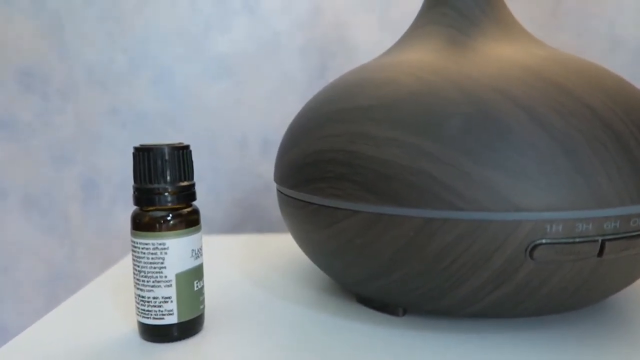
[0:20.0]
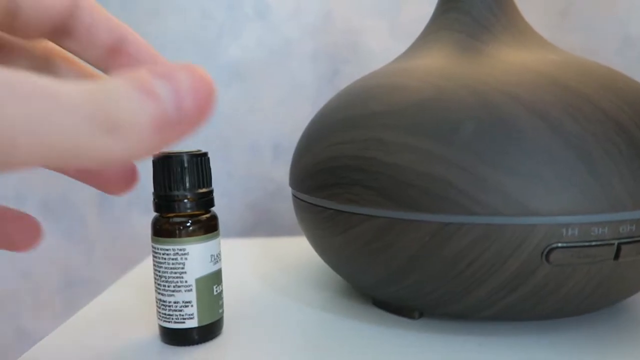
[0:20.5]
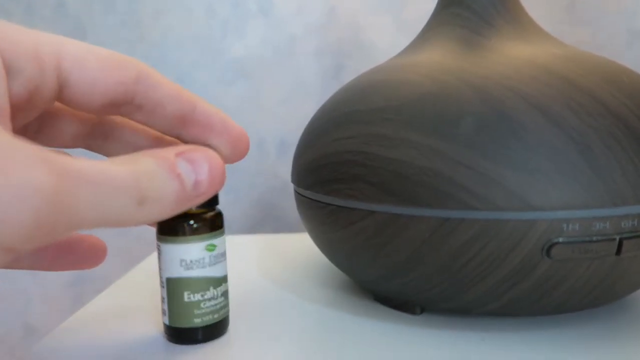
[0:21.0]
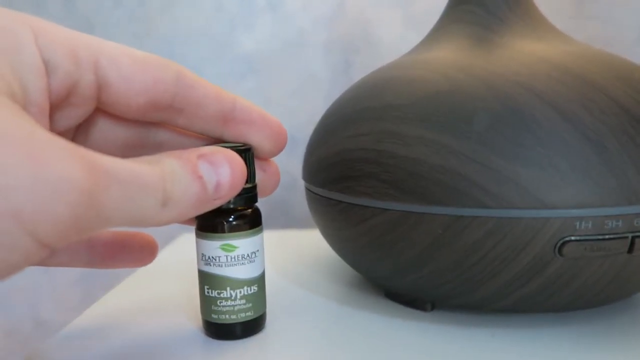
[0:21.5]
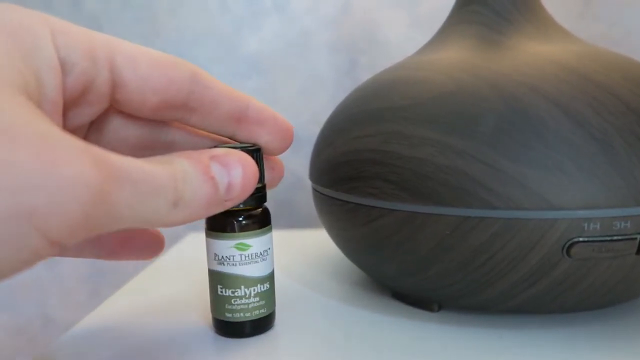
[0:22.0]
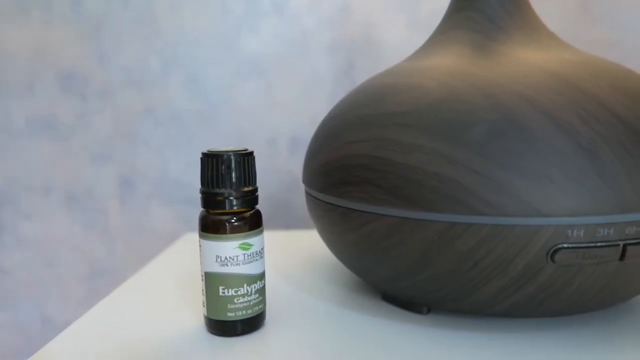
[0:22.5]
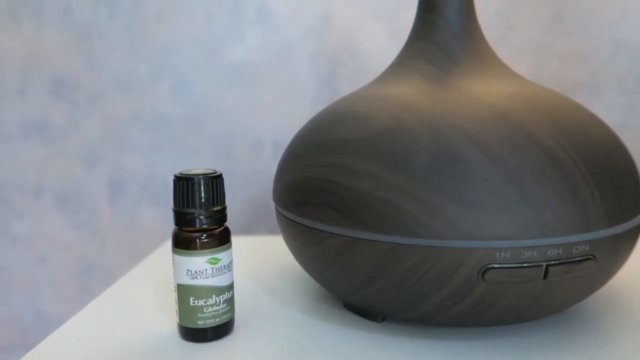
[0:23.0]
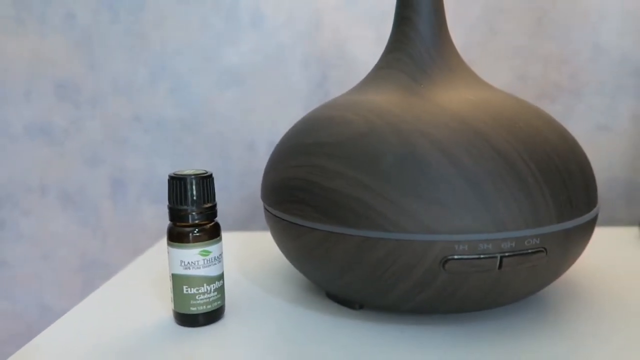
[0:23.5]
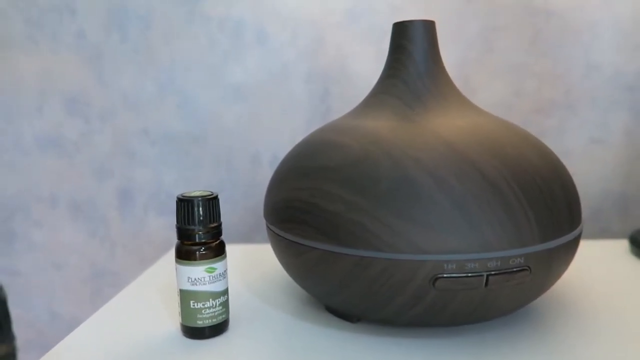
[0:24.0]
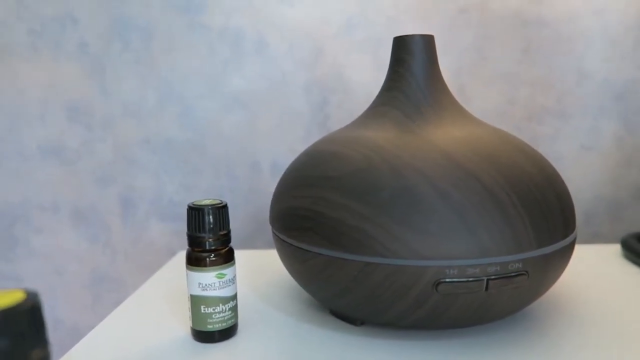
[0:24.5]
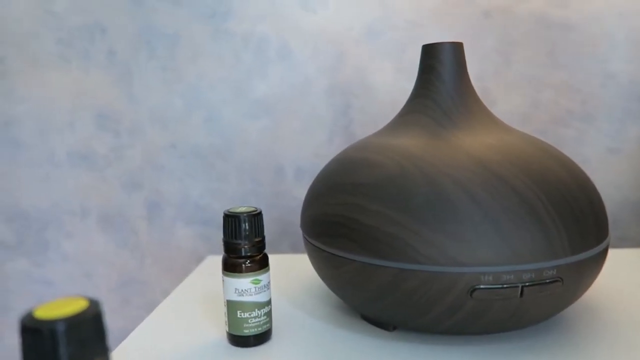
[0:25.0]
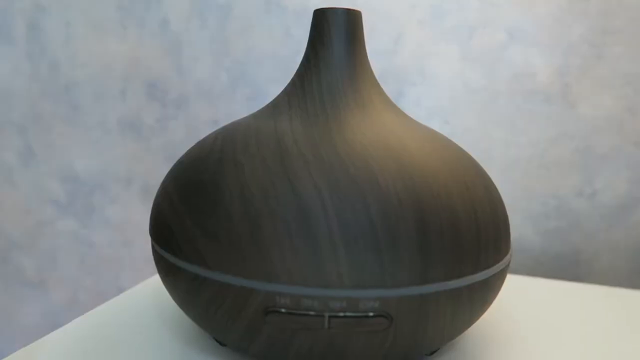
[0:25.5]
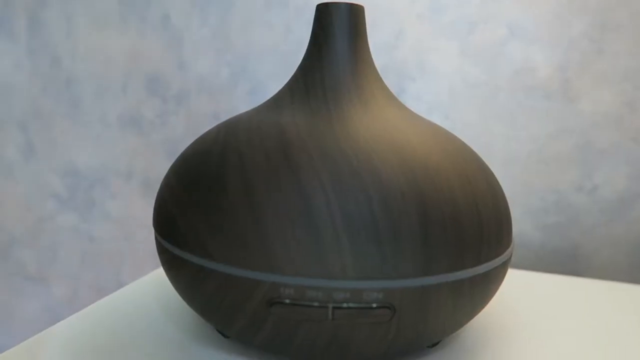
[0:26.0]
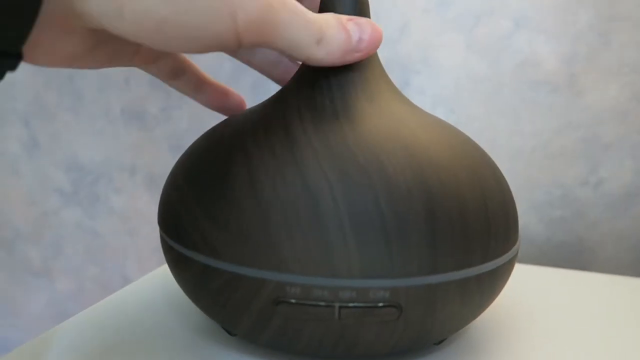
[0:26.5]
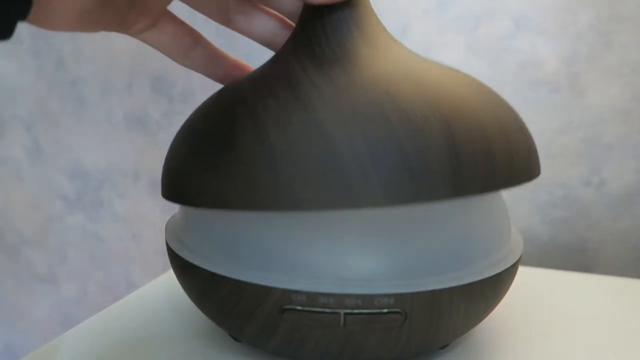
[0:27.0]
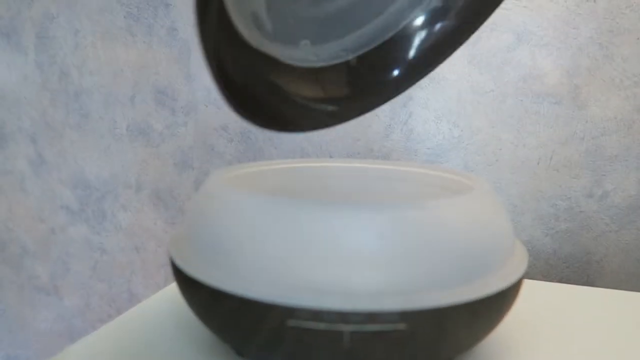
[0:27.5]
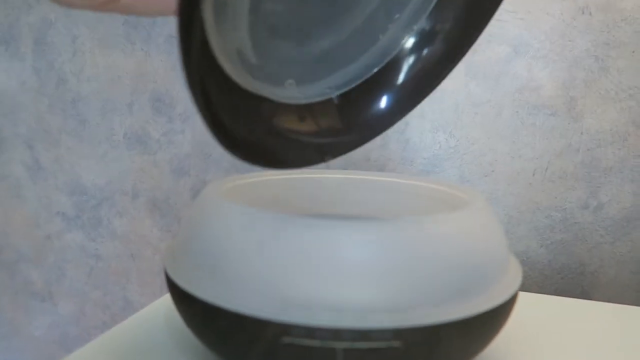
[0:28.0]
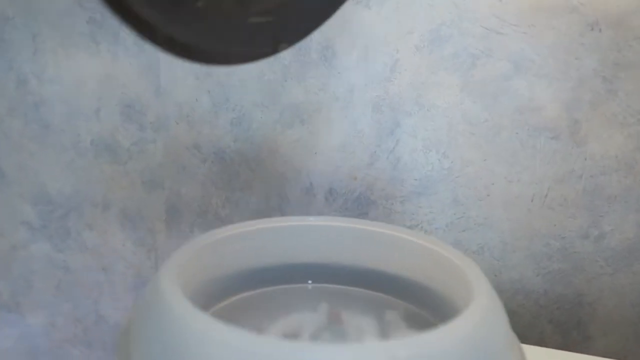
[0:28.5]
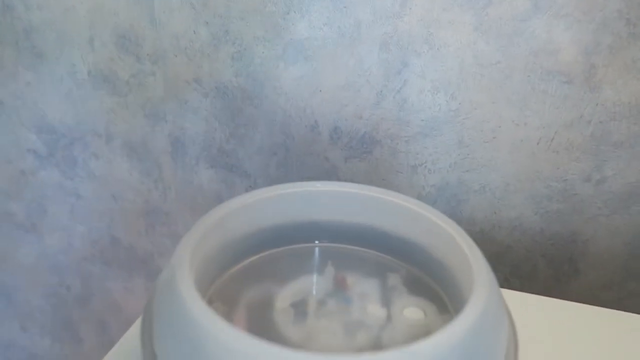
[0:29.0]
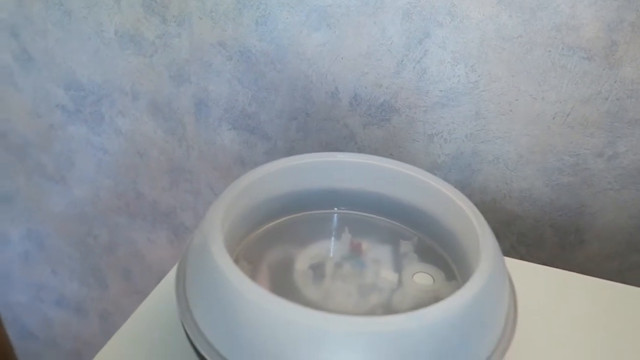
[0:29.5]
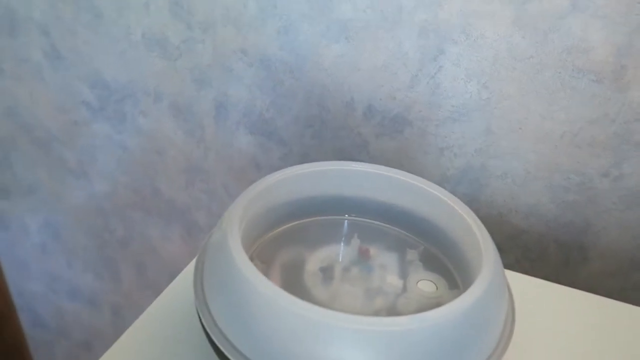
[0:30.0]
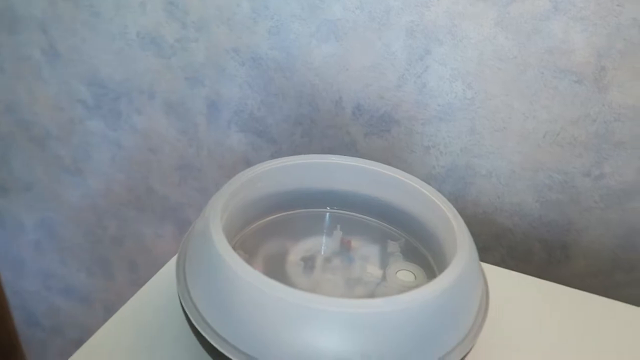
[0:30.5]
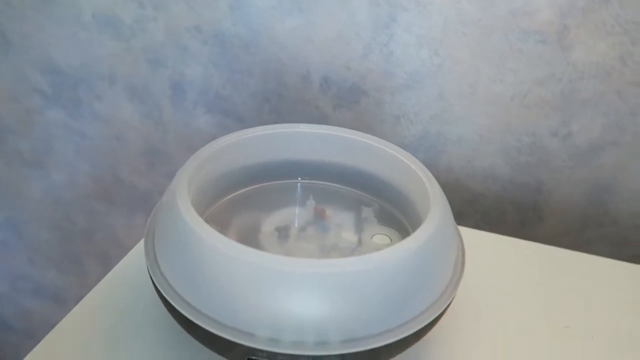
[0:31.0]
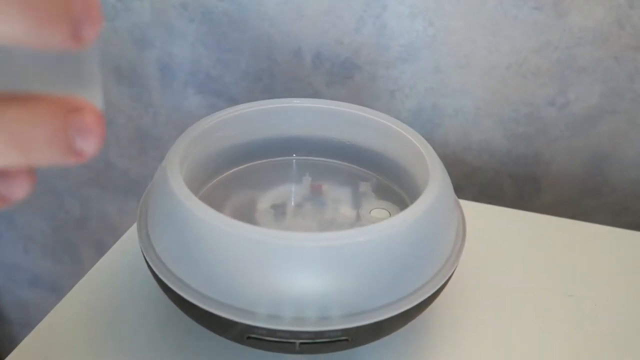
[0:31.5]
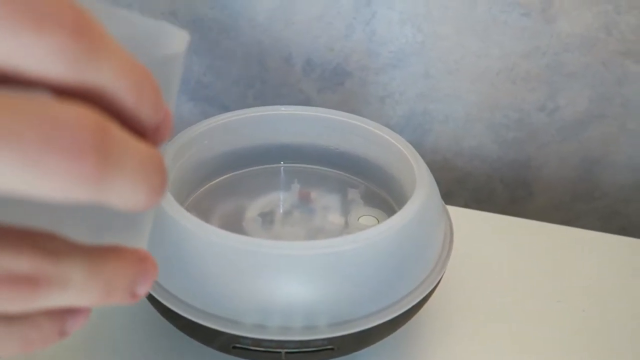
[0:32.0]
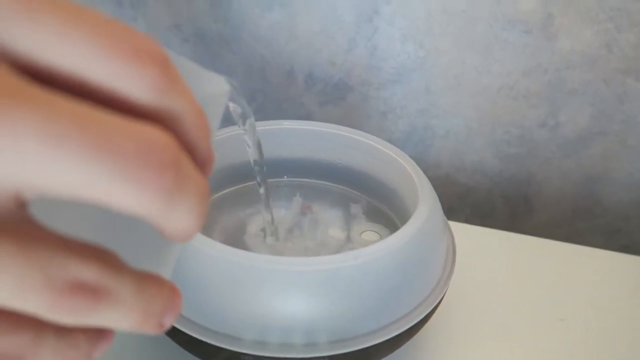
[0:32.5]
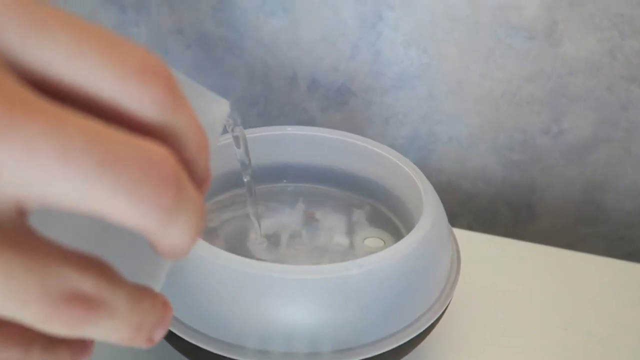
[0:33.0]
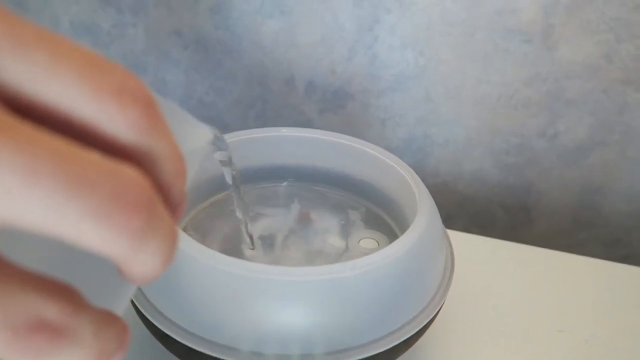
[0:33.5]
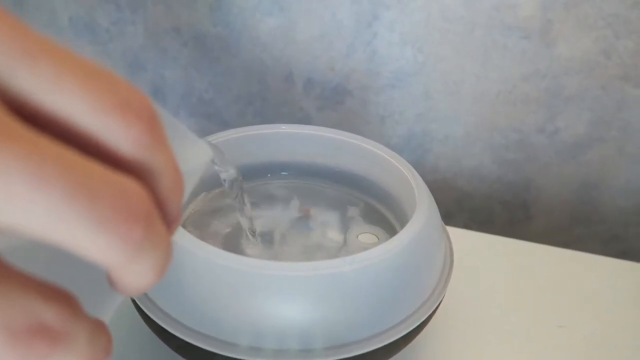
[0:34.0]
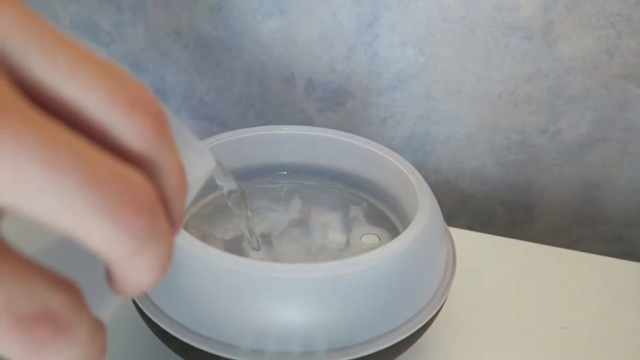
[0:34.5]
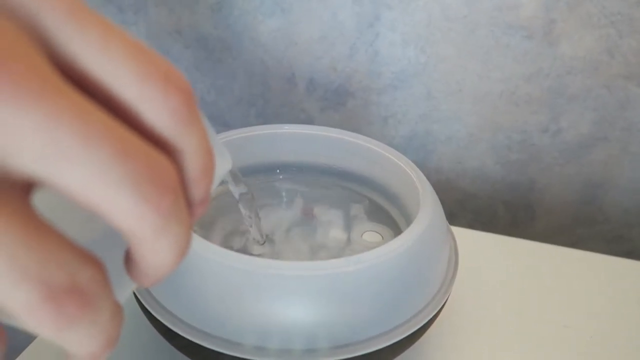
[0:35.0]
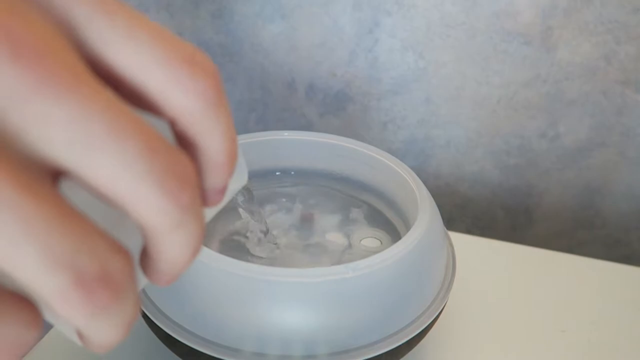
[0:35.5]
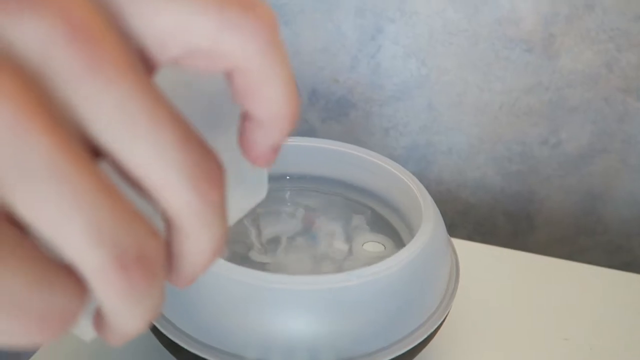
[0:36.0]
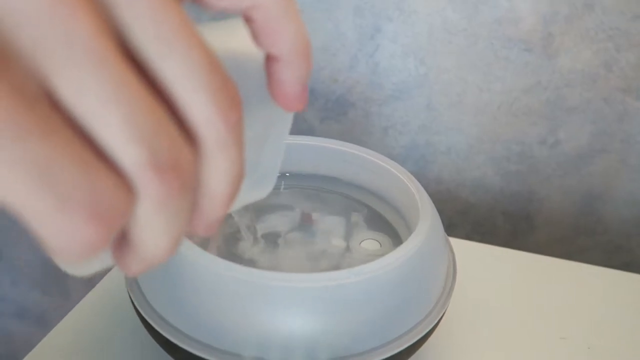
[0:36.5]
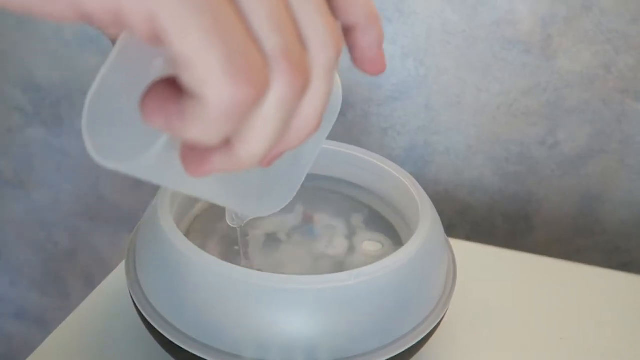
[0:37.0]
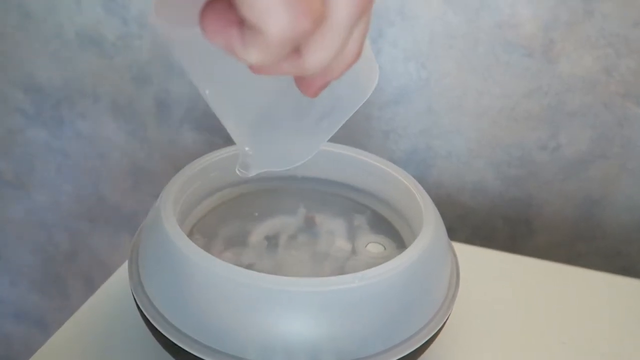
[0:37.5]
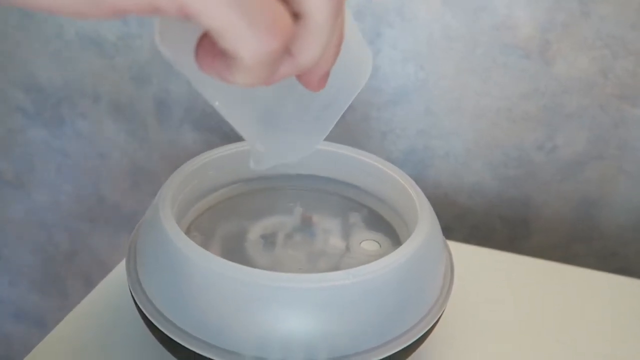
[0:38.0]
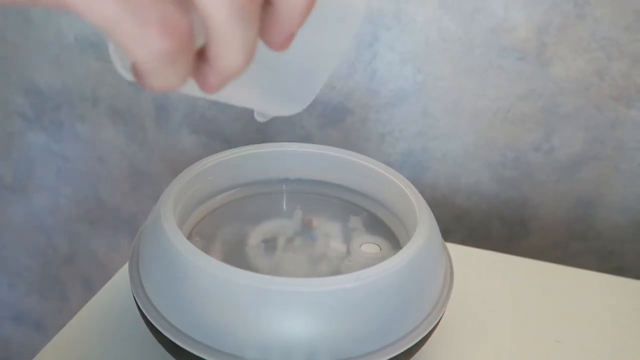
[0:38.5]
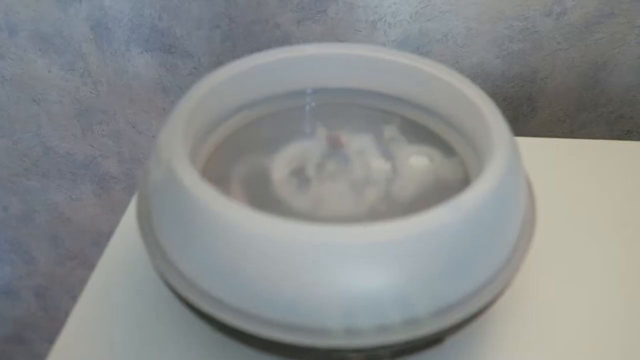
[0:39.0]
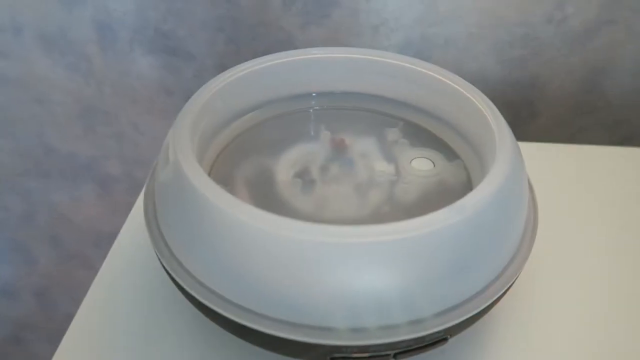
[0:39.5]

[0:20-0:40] The remaining essential oil container has a dark green or grey label. Someone picks it up and holds it to the screen, showing that it says "eucalyptus", with the brand "plant therapy" at the top. It is a little jar. To the right is what looks like a device for dispersing essential oils through a room, a kind of grey pot that looks like a tagine. The jar is let go, and the camera moves back to show several other similar jars on the table. The focus then moves to a black vase; its lid is lifted, revealing a white part underneath with water in it. A little more water is poured into the bottom half of the vase using a plastic container, which is tapped to make sure all the water gets out.